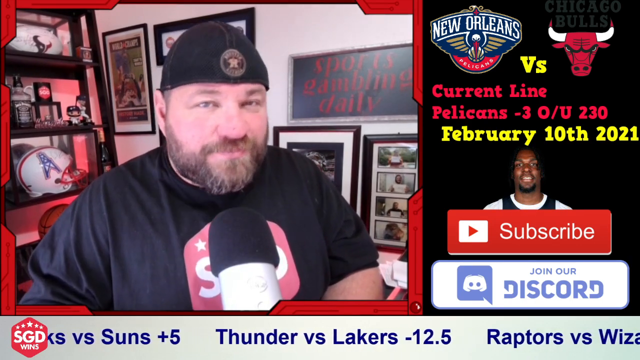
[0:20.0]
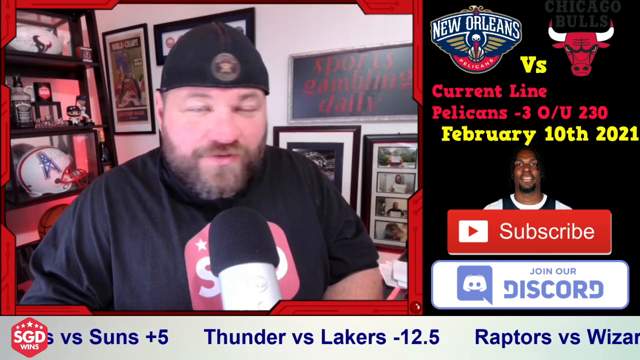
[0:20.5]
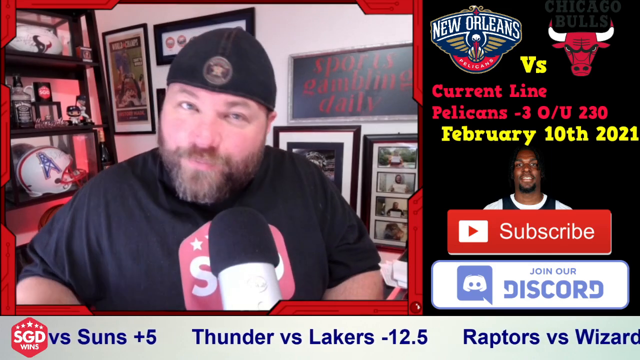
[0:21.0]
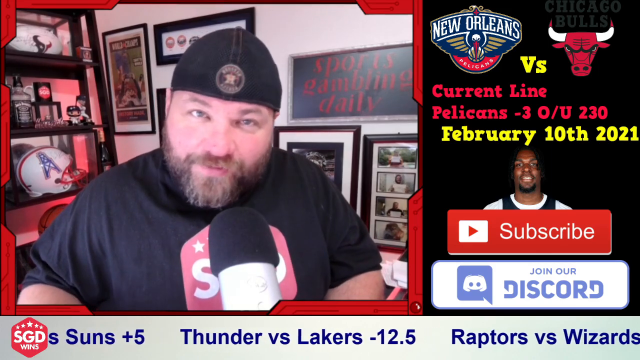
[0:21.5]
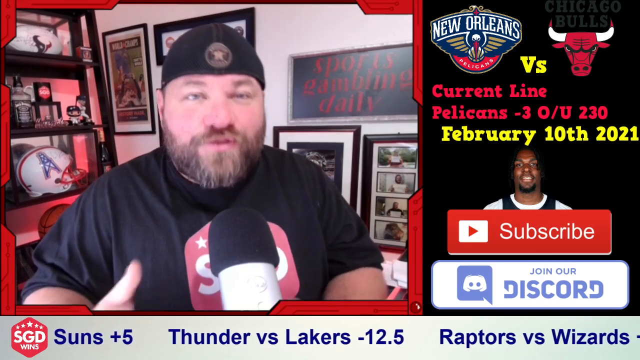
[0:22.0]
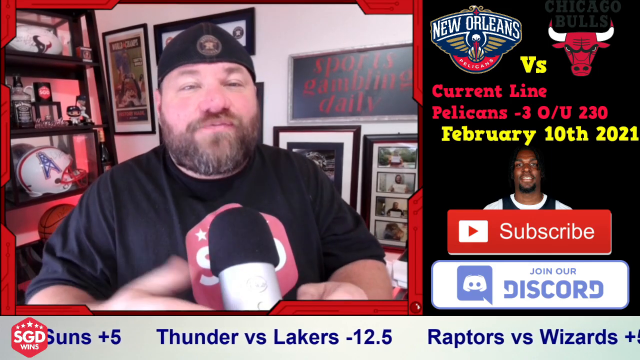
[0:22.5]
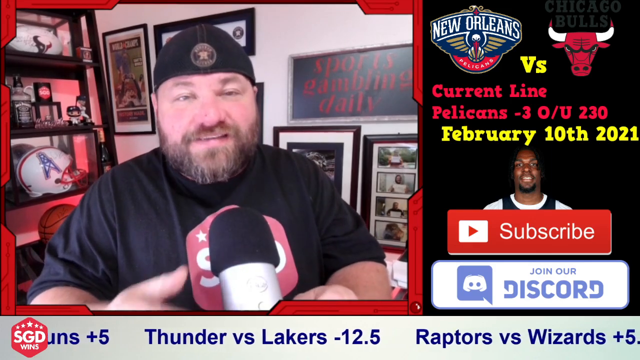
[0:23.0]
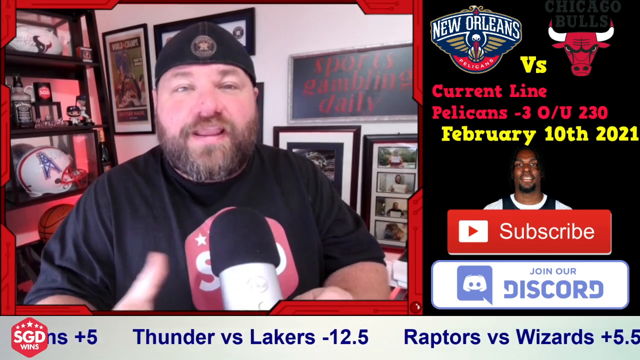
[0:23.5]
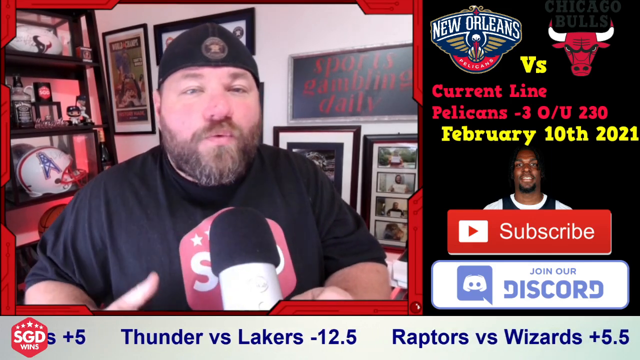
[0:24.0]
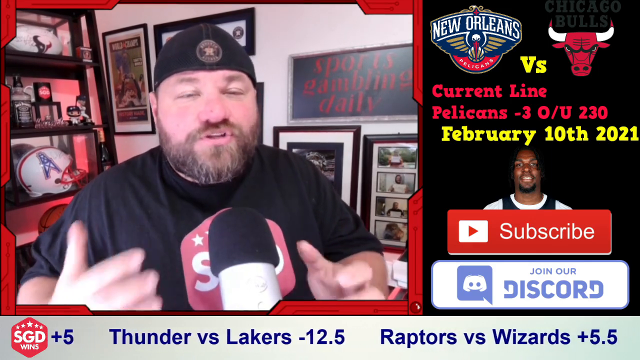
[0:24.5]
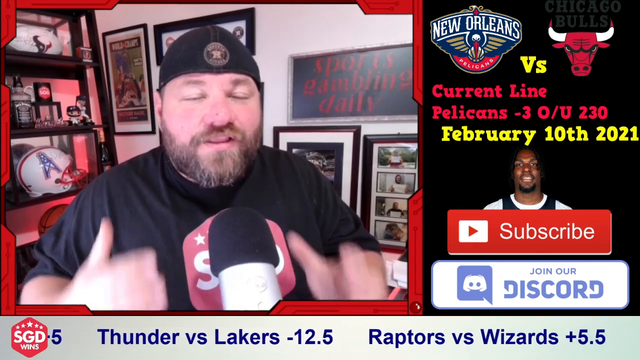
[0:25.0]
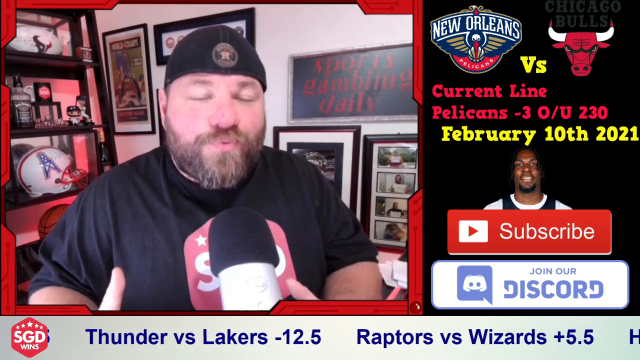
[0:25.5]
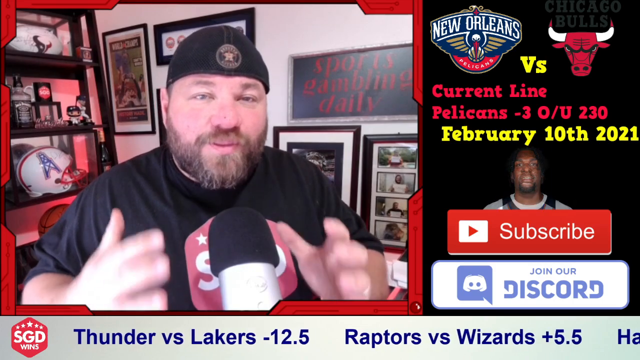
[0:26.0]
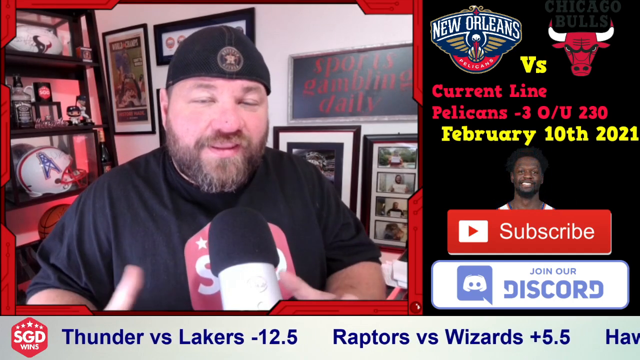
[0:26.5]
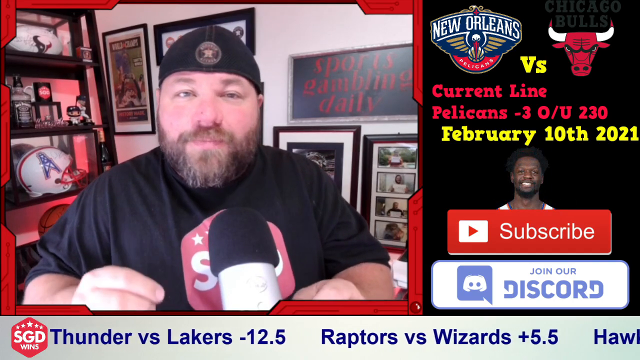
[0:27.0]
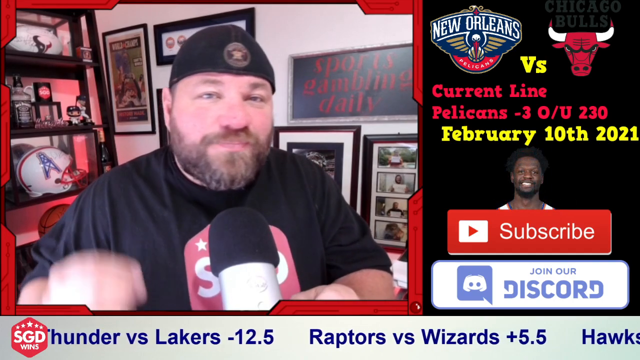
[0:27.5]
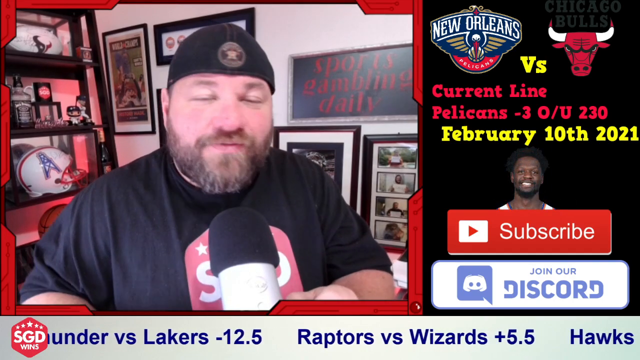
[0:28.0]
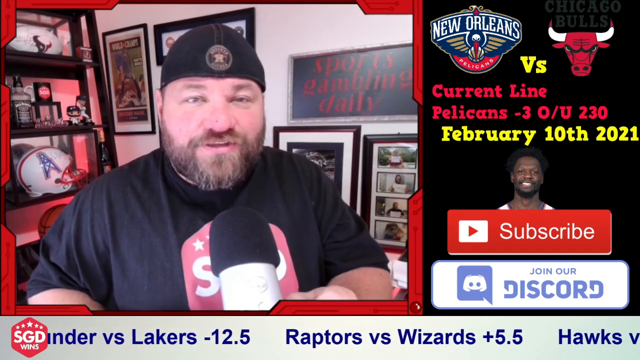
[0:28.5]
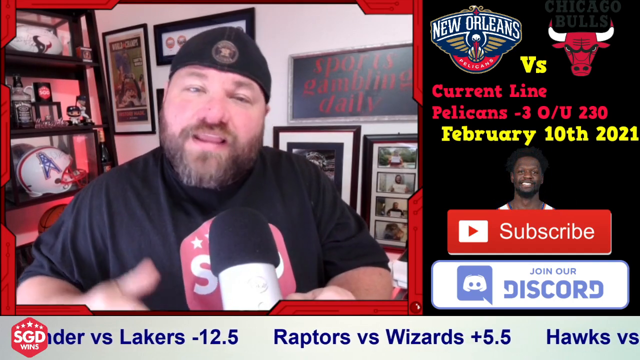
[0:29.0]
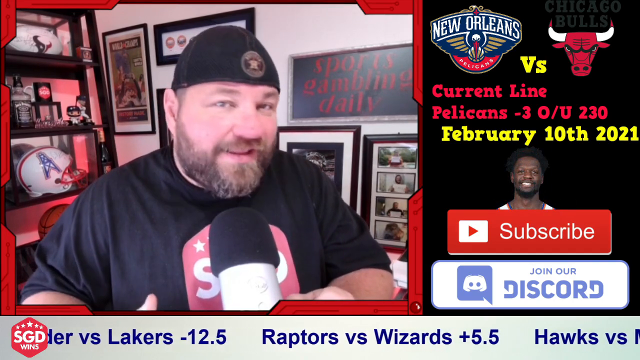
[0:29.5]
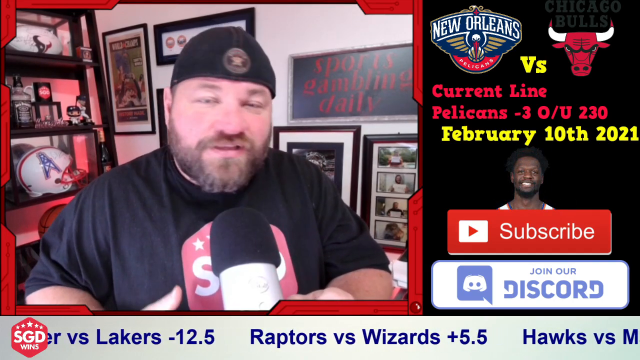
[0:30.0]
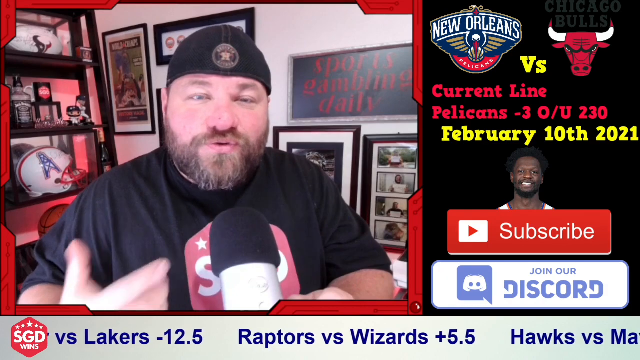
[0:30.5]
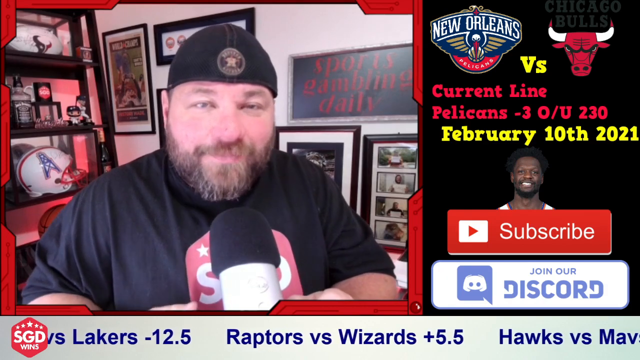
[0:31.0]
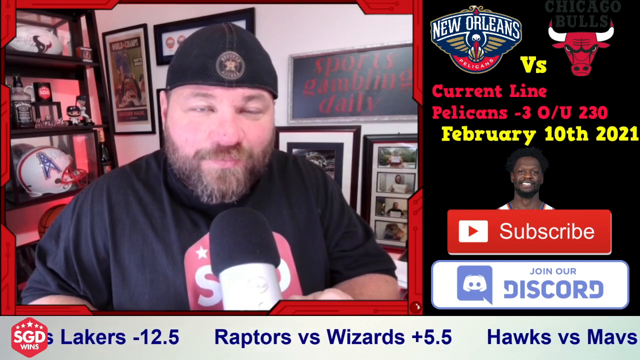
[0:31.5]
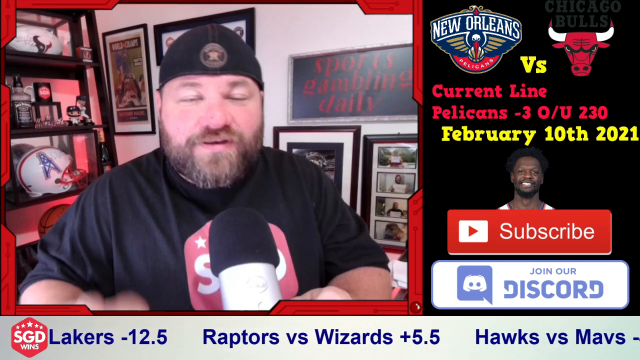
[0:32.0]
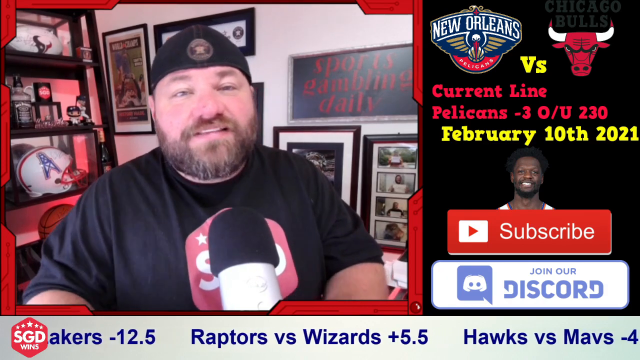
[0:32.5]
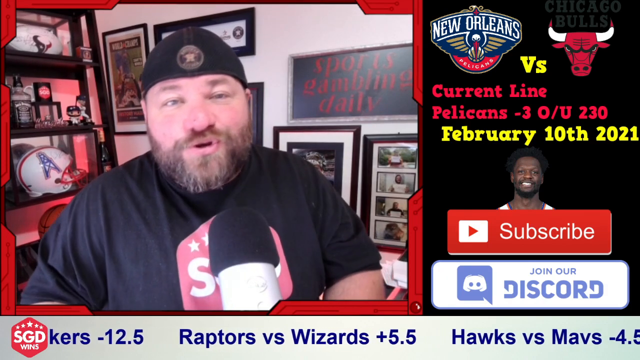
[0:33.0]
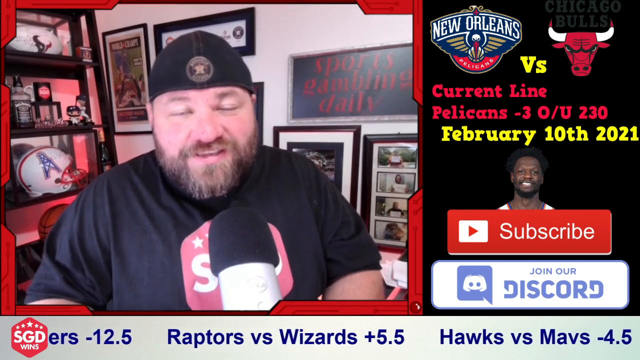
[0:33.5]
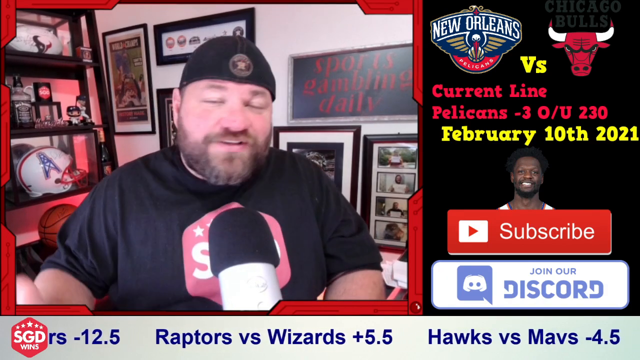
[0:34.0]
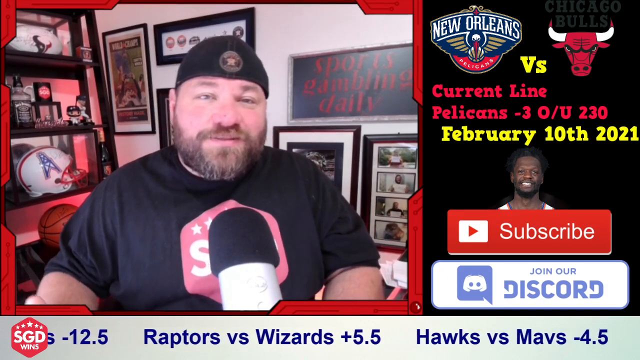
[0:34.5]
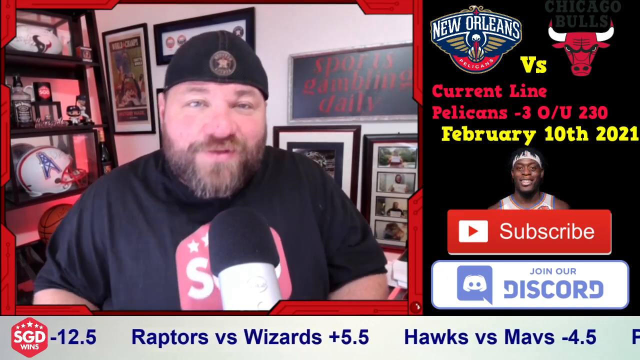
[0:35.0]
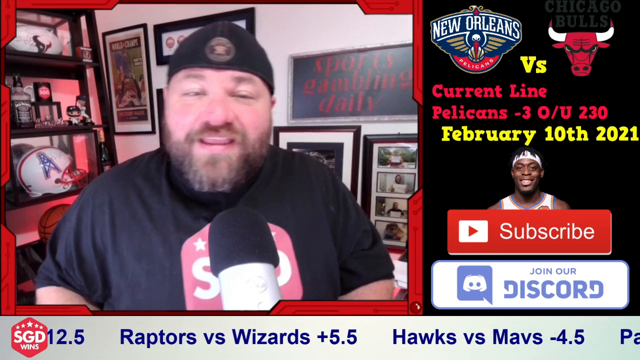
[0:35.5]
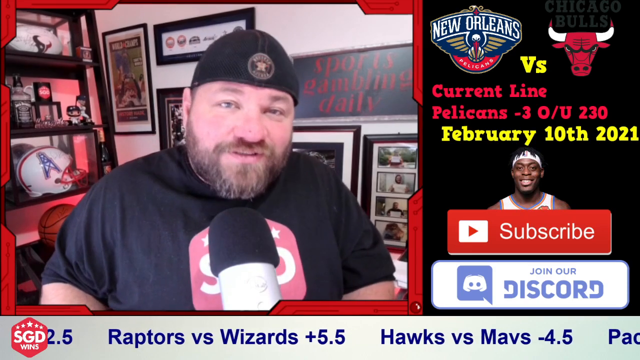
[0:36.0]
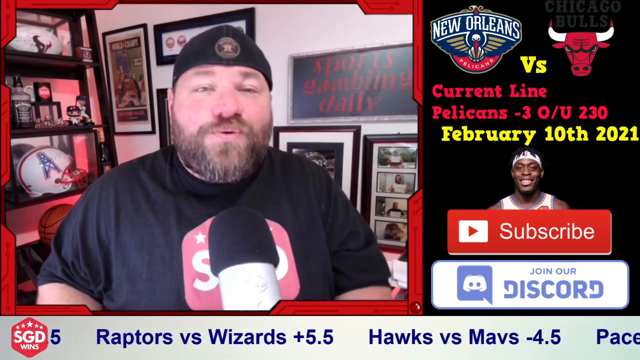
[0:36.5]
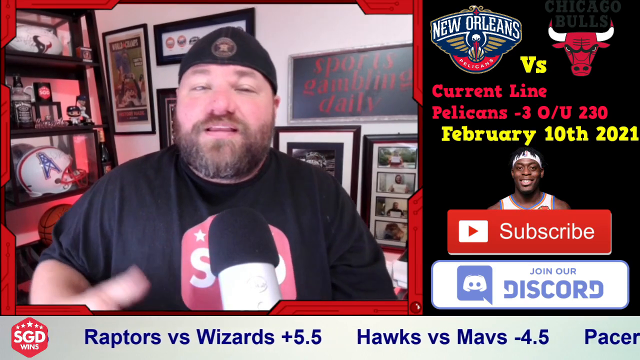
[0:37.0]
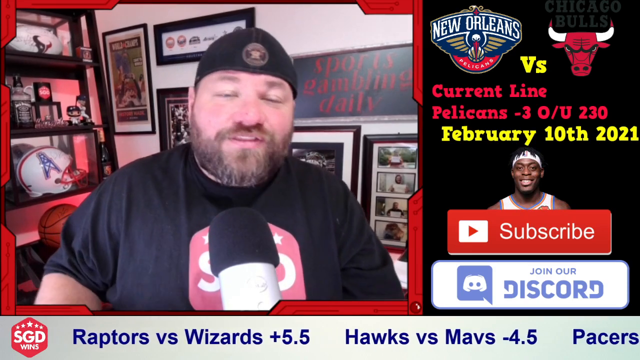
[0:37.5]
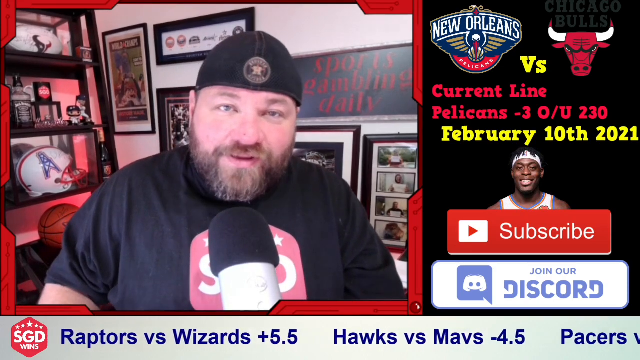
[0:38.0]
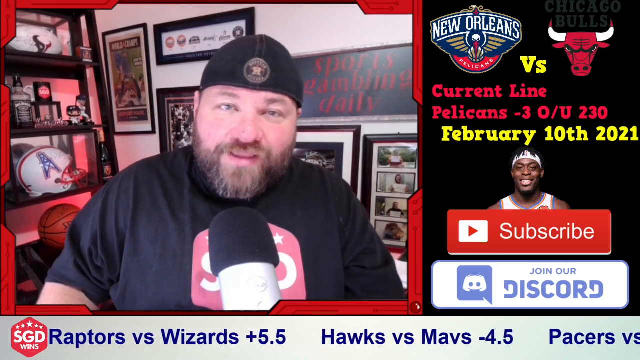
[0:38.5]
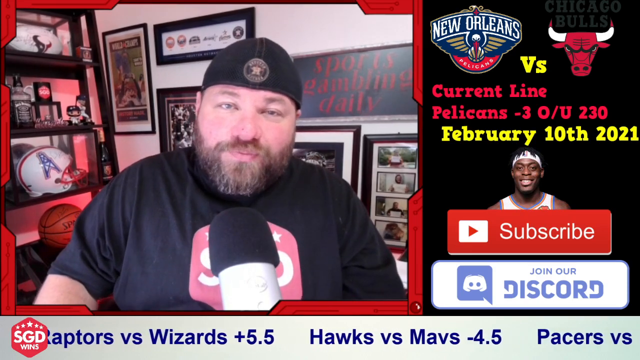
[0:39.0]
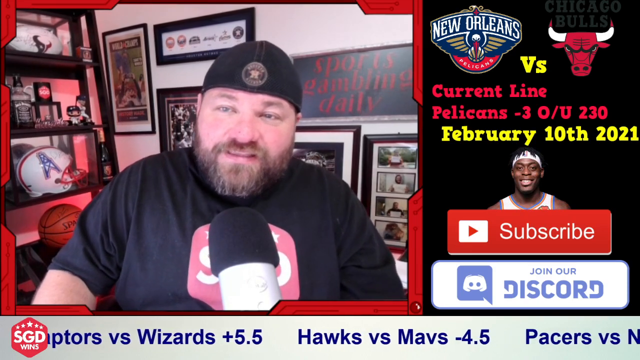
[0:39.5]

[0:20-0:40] A man talks into a microphone on the left of the screen, moving his hand up and down a little and blinking as he continues talking. On the right is information about New Orleans and the Chicago Bulls, along with the date February 10th, 2021. Behind the man are various sports pictures and memorabilia on the wall, and on the left of the screen there is a helmet behind him that looks like it has the Houston Oilers emblem on it. A picture just above the YouTube word "subscribe" changes: at first it looks like an African American basketball player, then it switches to another player wearing a white jersey, and later it switches back.